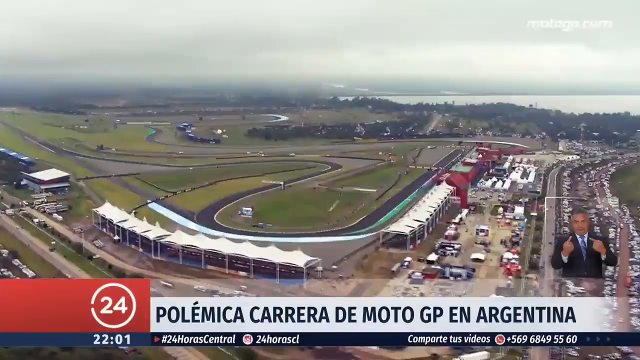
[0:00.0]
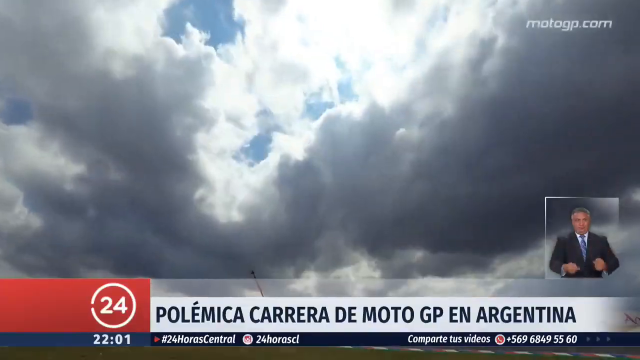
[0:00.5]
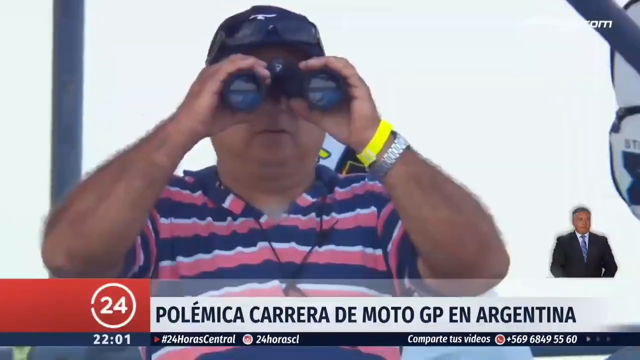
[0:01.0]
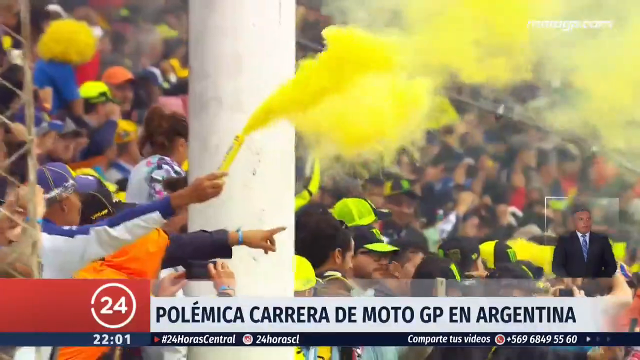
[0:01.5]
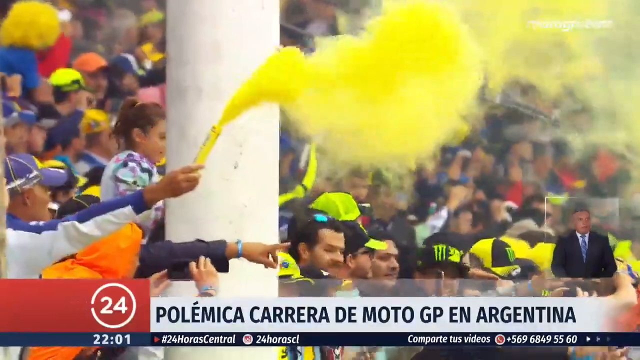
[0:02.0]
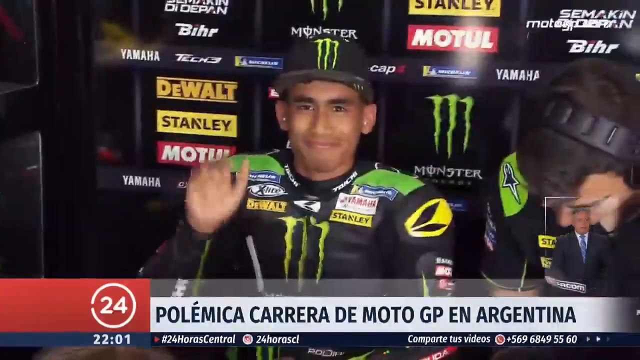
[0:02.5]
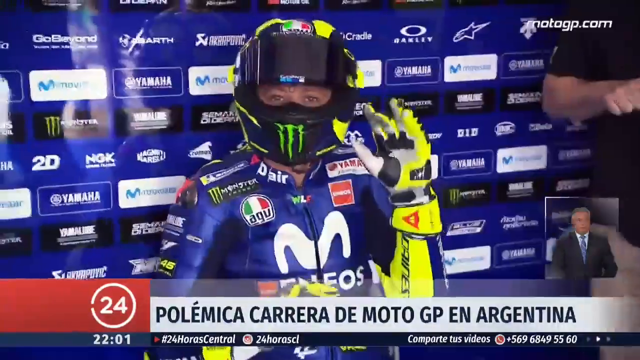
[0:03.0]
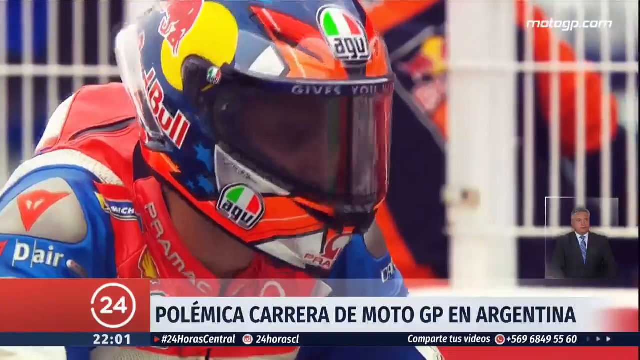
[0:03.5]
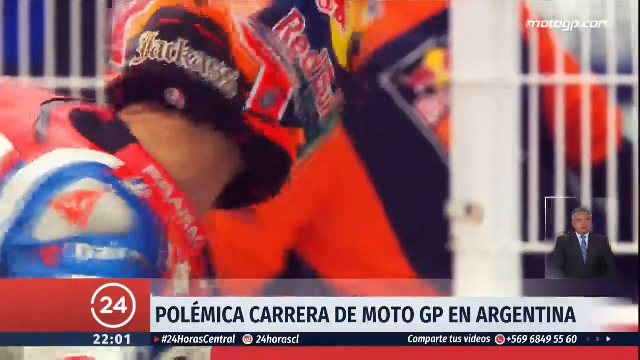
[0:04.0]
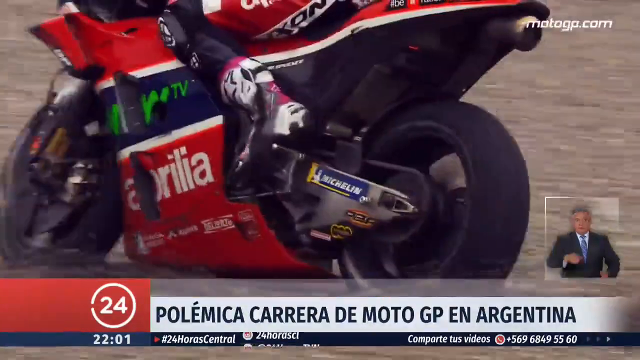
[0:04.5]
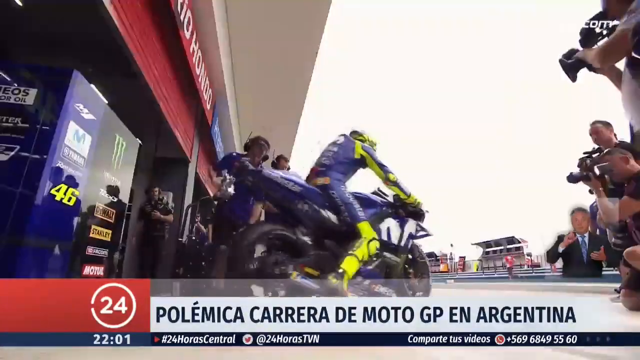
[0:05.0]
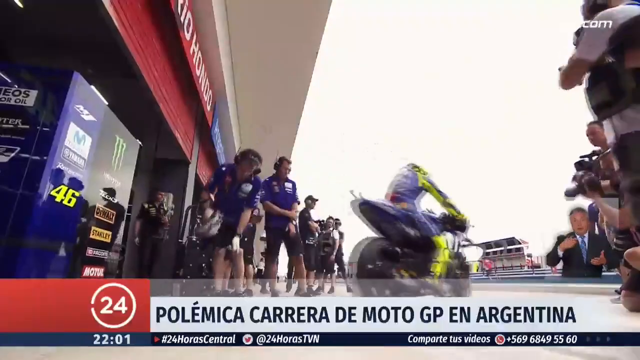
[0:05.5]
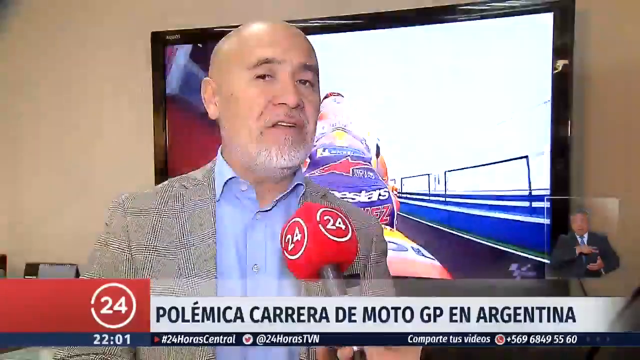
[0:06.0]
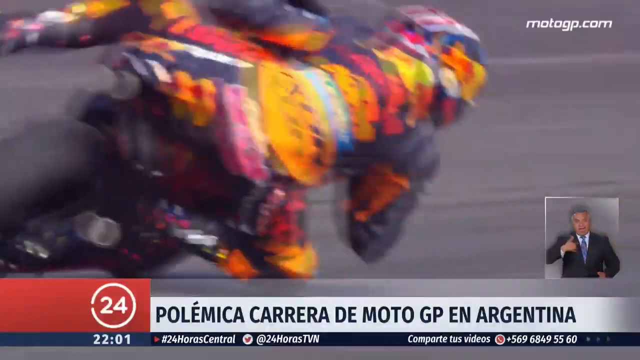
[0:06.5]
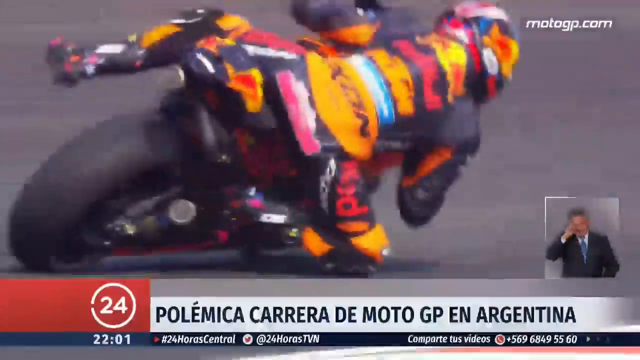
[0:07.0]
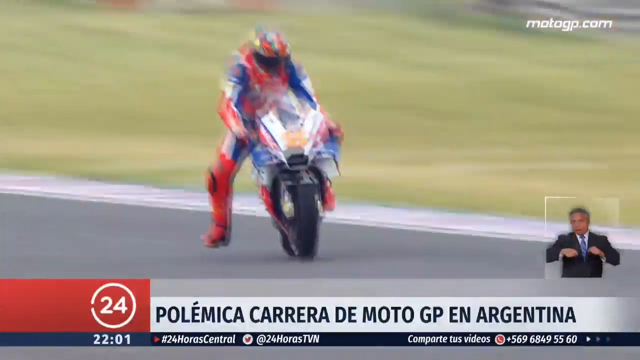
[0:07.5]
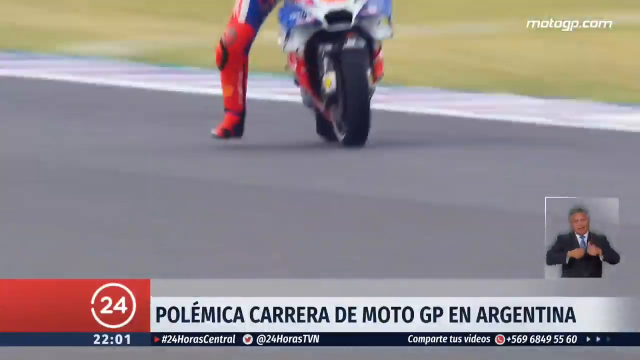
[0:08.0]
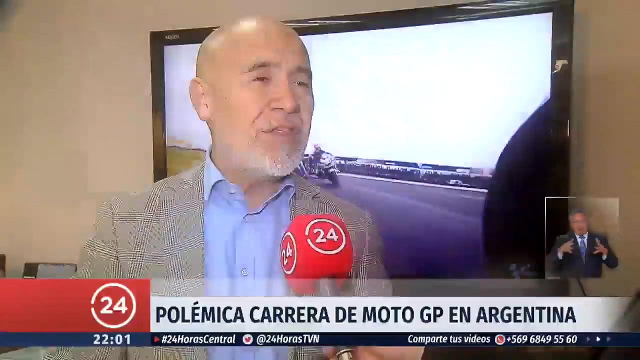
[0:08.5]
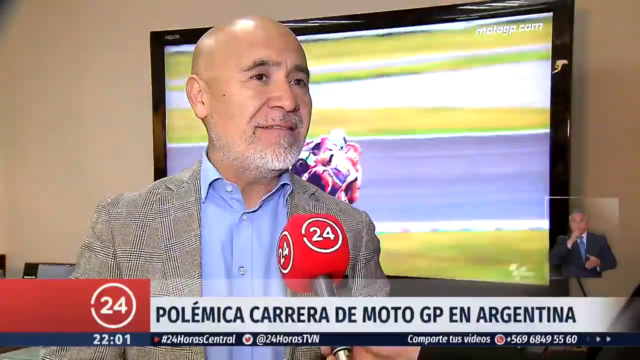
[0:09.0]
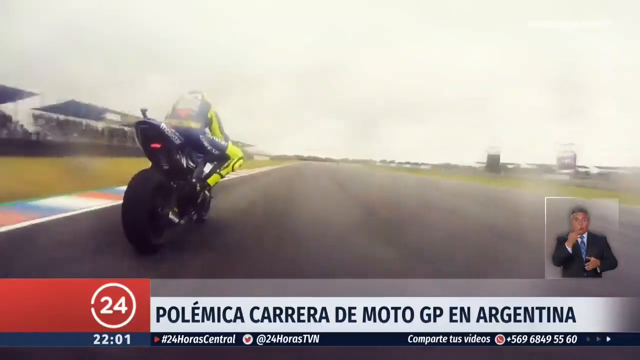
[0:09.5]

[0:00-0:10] On a cloudy day, the setting appears to be another country, with mountainous regions, what looks like a racetrack, some buildings, tarps and some vehicles. A "24" appears on the left side of the screen, apparently a news channel. Different scenes follow: yellow celebratory smoke, people in lime-green hats, and sponsors including Stanley, Monster Energy and Dewalt. Racers in different colors appear, and it is a motorcycle race, with fast motorcycles and reporters. A man is being interviewed, standing in front of a monitor.